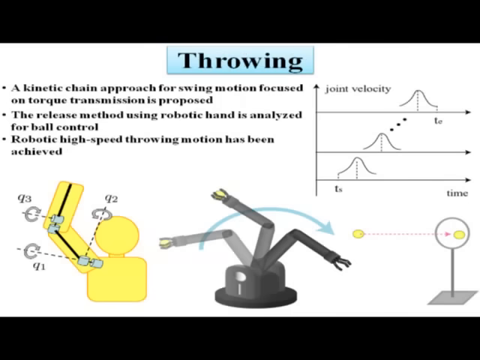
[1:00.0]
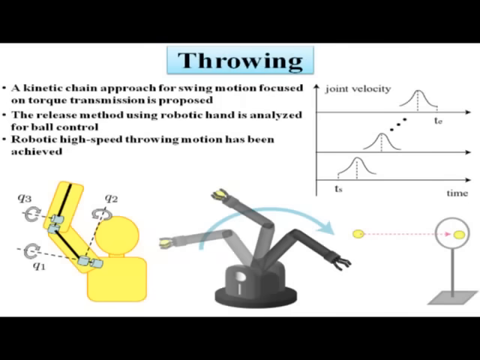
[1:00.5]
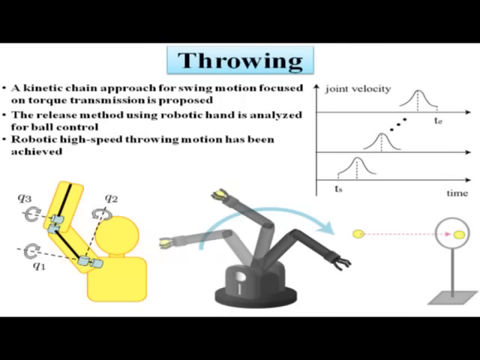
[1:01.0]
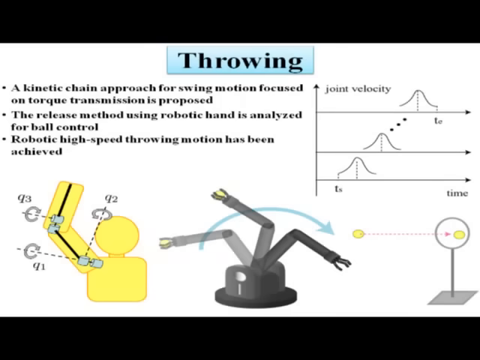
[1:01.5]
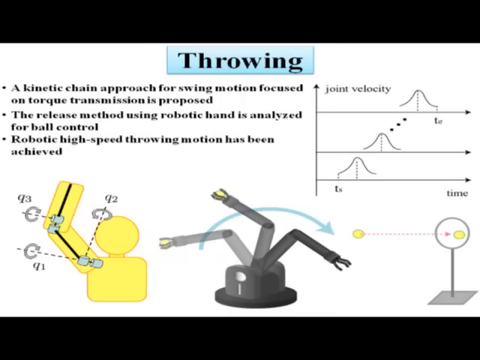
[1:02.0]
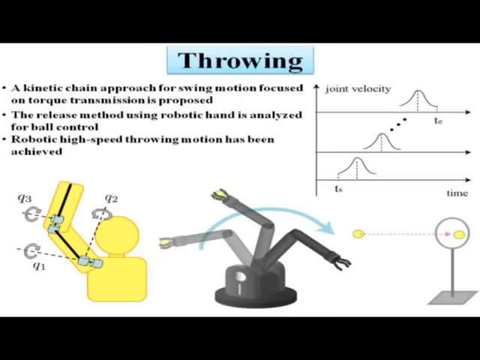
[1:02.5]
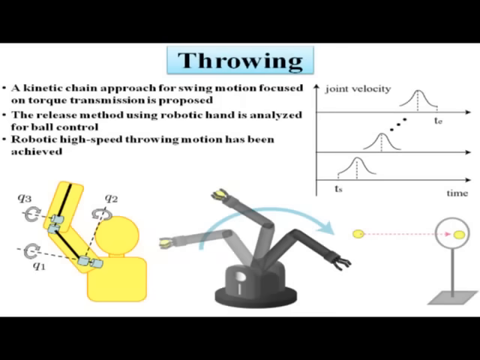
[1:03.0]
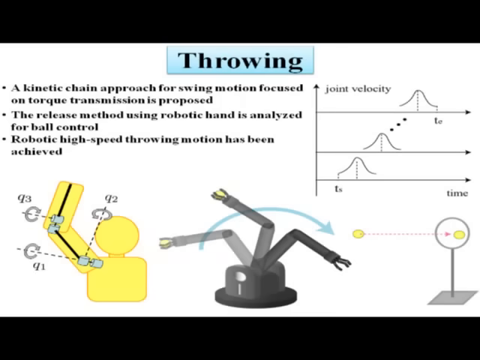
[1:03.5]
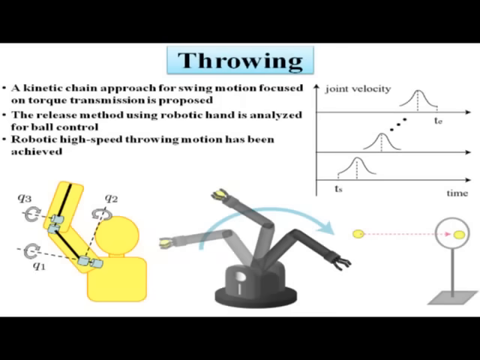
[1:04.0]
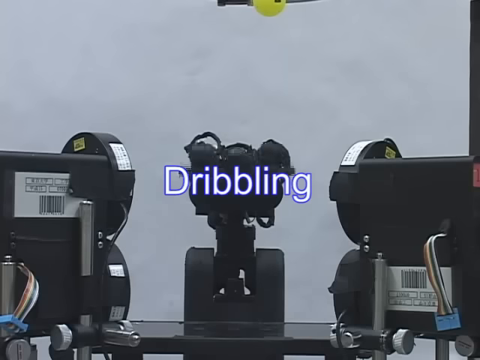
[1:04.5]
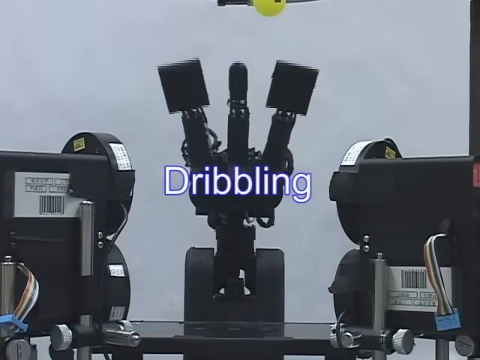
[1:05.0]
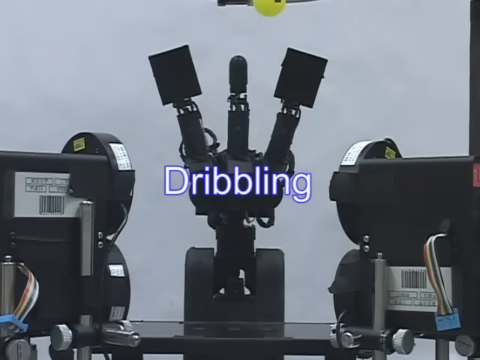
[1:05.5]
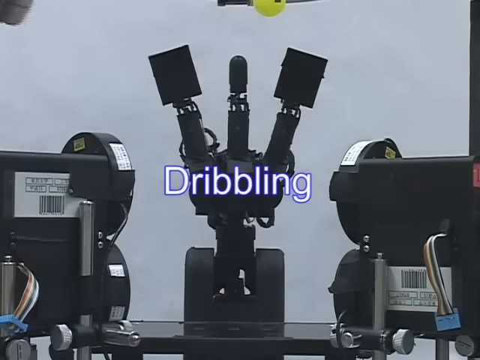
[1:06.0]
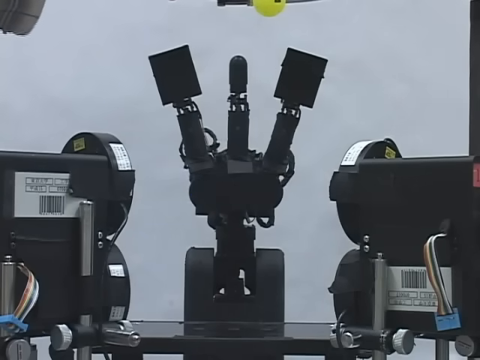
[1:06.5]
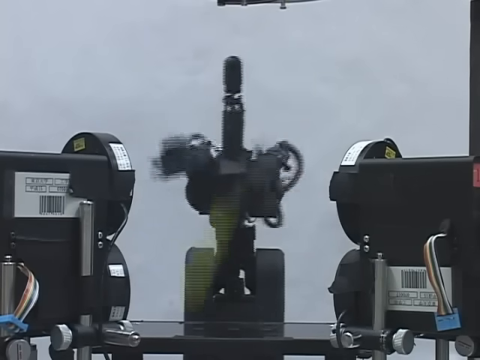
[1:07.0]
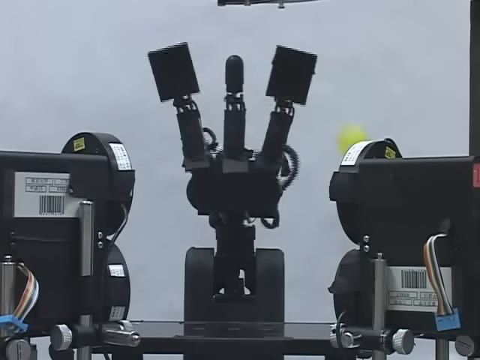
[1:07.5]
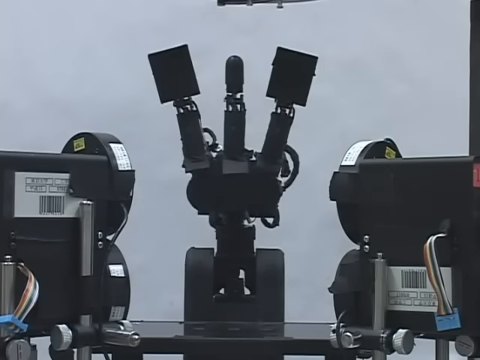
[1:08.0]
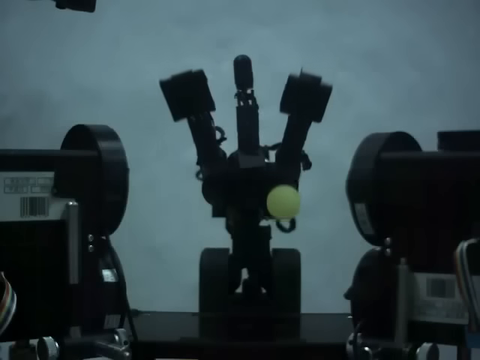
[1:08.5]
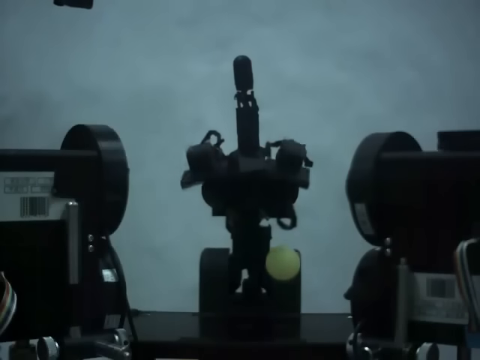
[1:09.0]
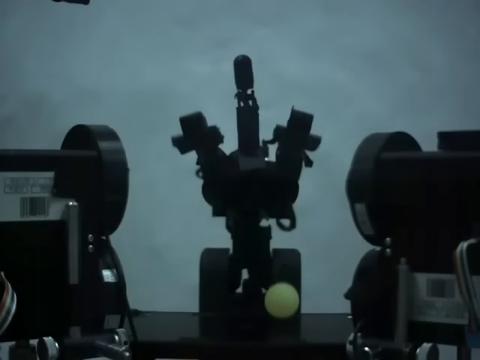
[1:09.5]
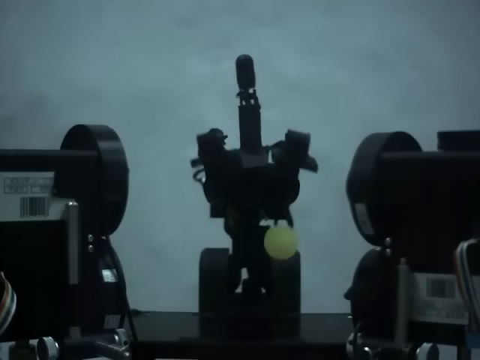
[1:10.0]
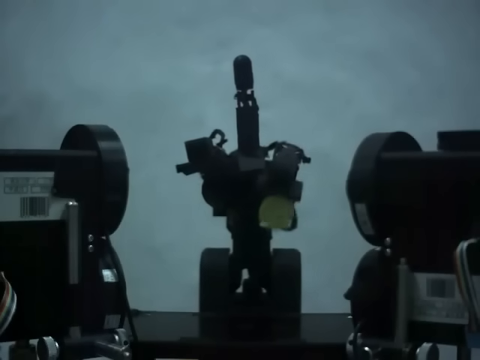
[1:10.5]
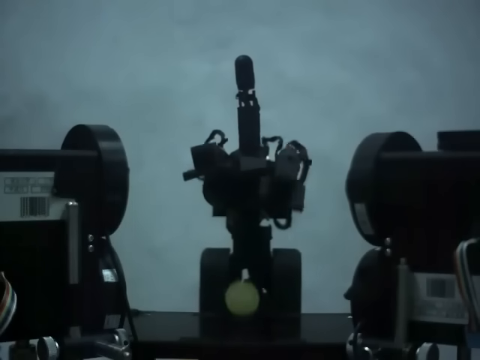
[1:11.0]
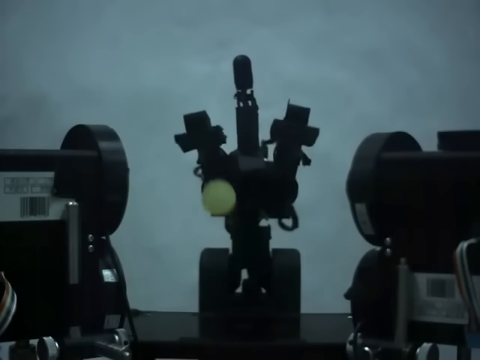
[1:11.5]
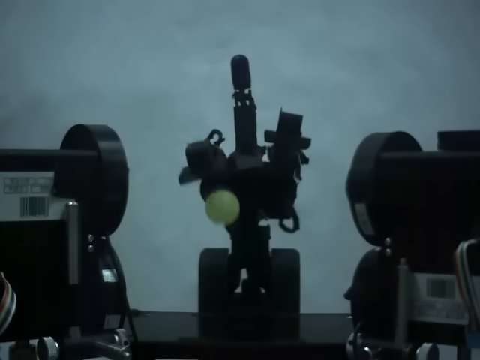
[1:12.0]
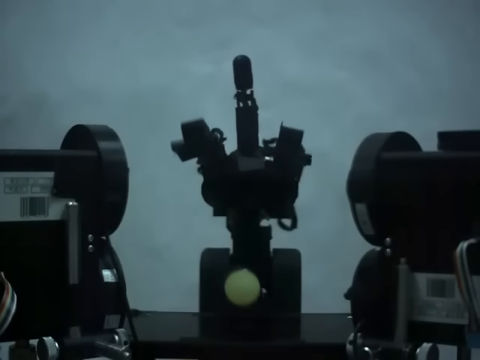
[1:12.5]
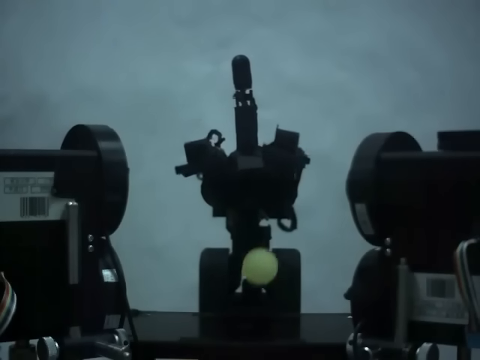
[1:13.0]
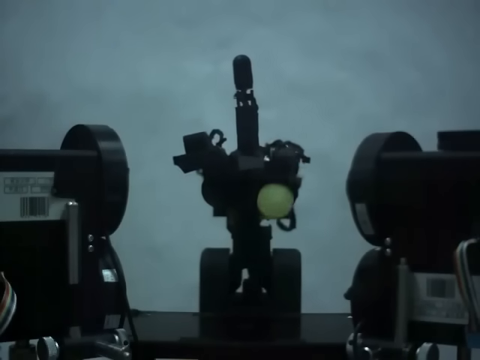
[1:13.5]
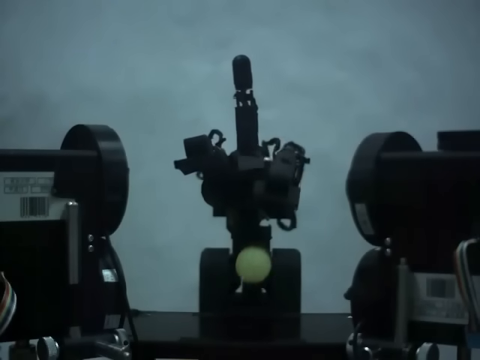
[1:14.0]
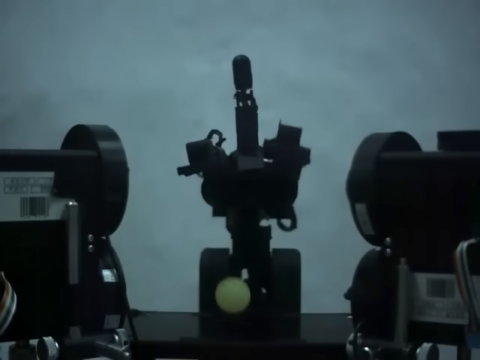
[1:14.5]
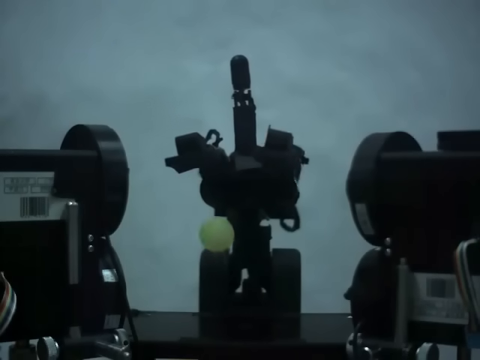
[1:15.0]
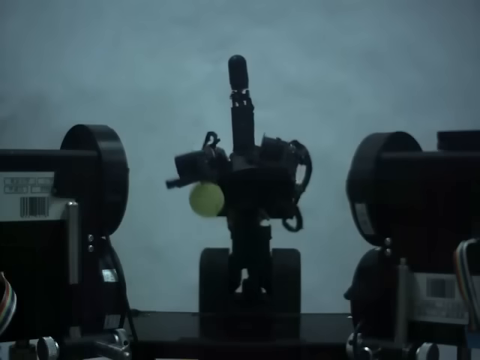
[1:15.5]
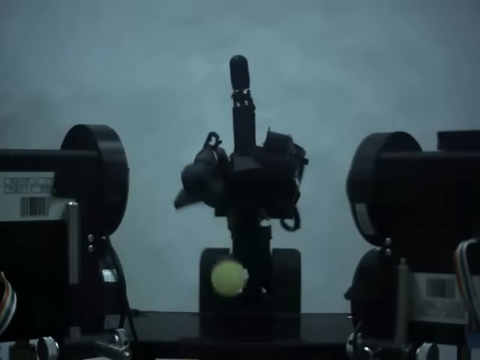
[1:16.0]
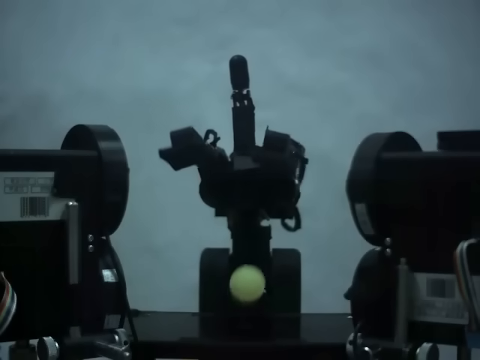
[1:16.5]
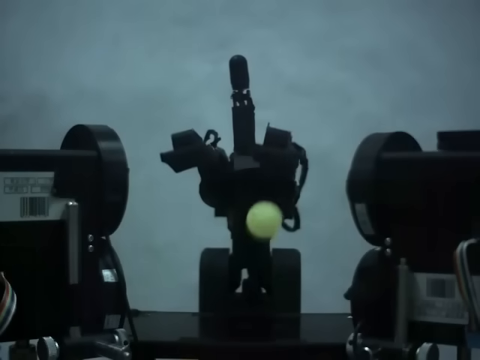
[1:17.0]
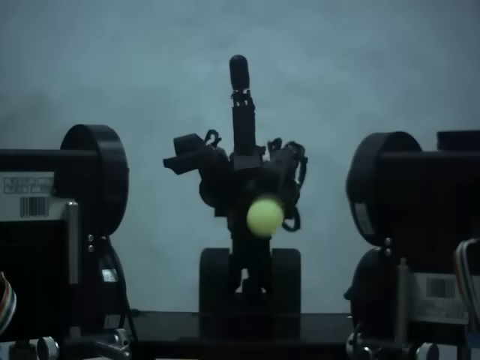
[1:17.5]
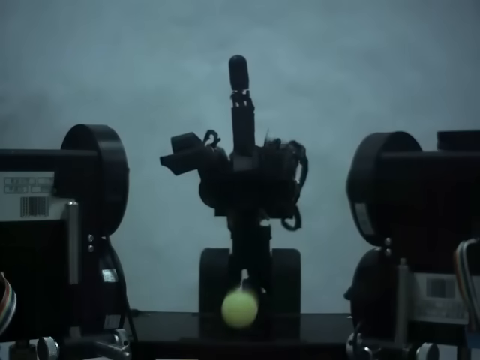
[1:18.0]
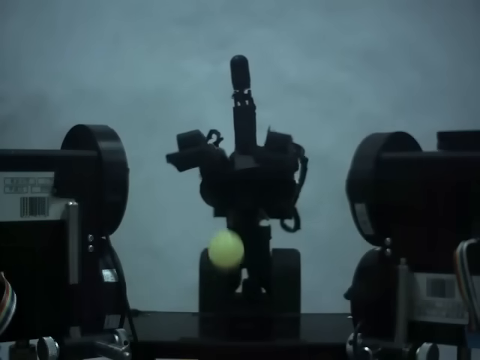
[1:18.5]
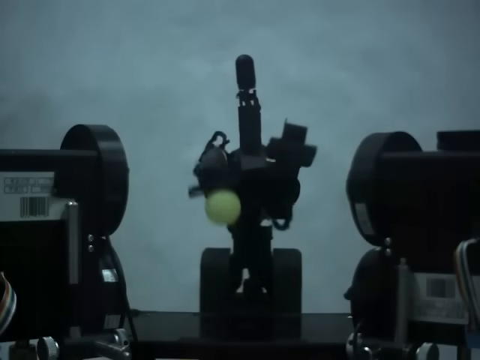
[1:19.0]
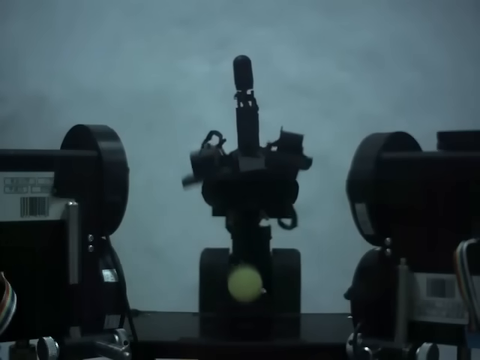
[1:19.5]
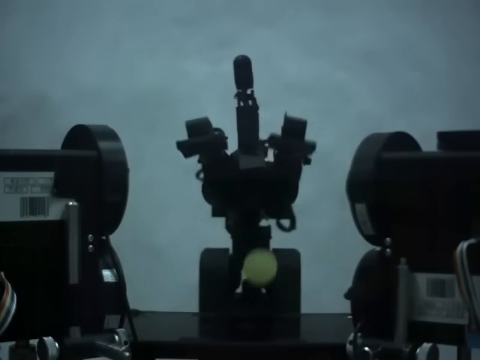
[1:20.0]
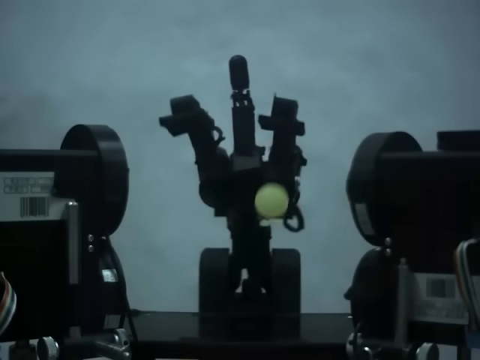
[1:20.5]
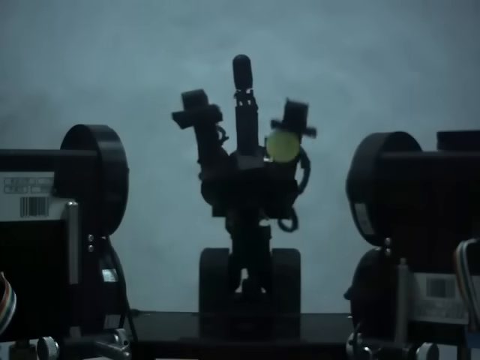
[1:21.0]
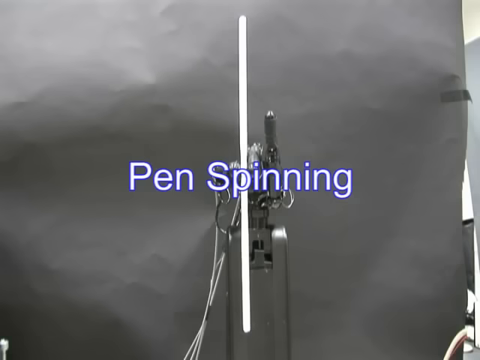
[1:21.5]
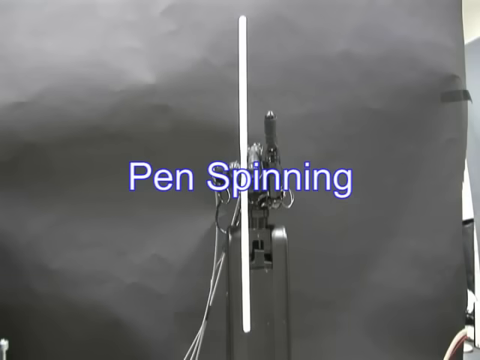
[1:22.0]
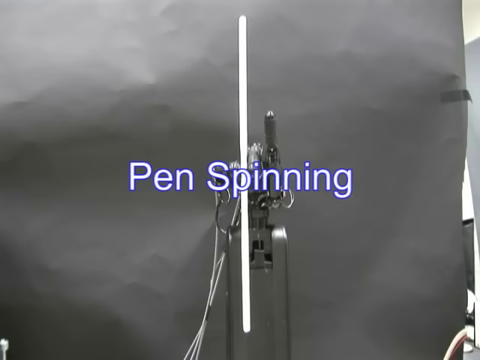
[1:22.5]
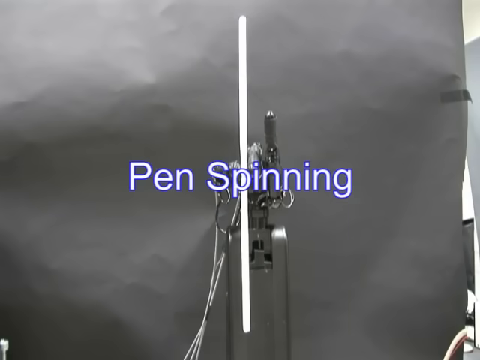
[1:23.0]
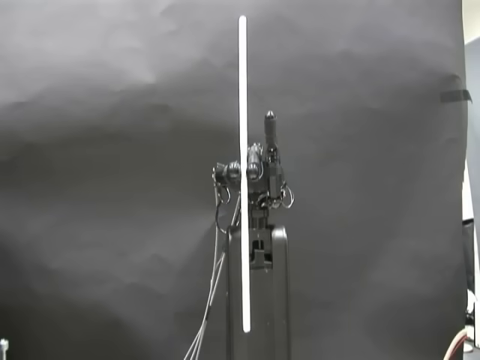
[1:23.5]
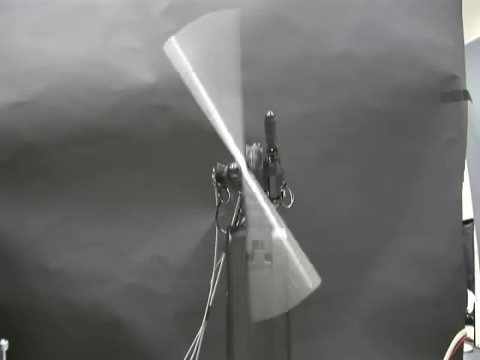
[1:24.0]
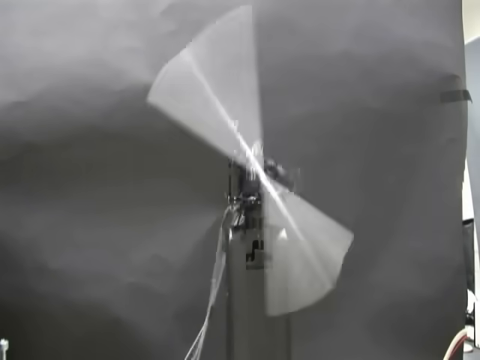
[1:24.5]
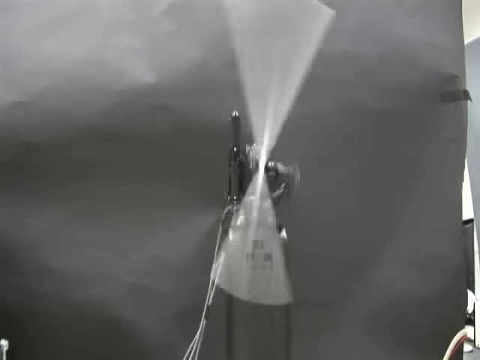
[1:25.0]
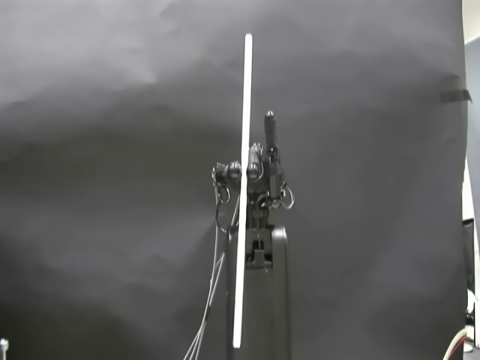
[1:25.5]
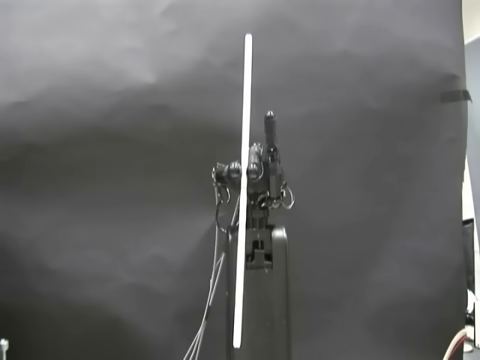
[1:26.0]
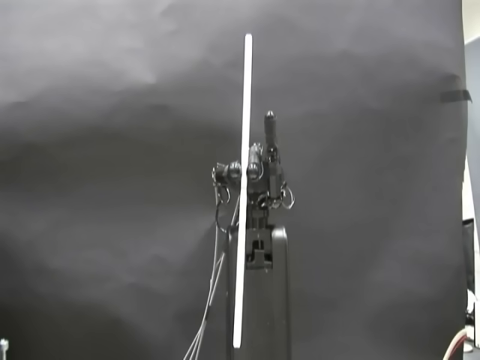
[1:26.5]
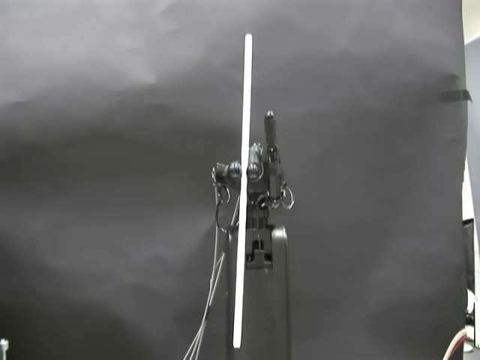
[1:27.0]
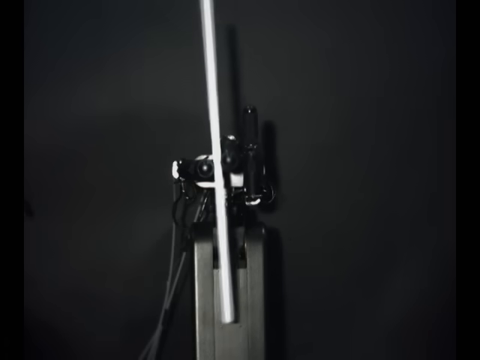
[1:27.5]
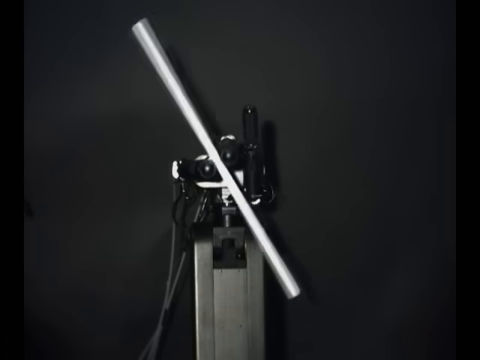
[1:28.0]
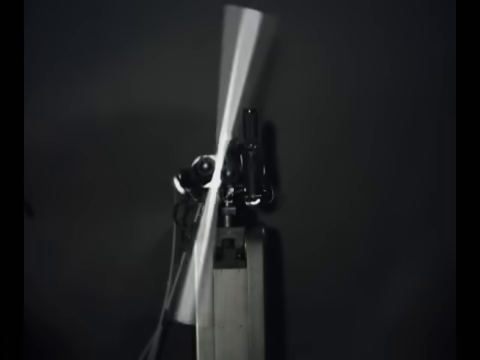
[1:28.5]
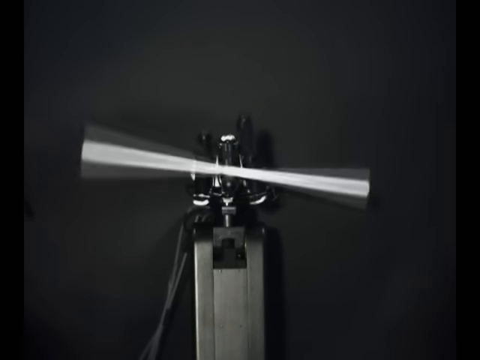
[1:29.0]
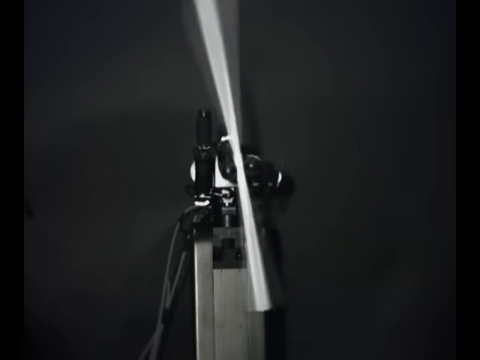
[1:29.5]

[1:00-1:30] A PowerPoint slide is titled "Throwing". Various text at the top left describes the method and how it is approached; the bottom left has a diagram of what the robot arm does, kind of showing where the motion takes place; the top right has a graph of joint velocity over time with various data points showing how the robot moves. The scene then moves to the real-life robot, with the text "dribbling" in the middle in white lettering on a blue background, and the robot dribbles a ball that is dropped in front of it, very quickly, followed by a slow-motion view of how it dribbles the ball. Next is a pin spinning scene, where a robot spins a pin around, then a slow-motion view of what the robot does to spin the pin around.